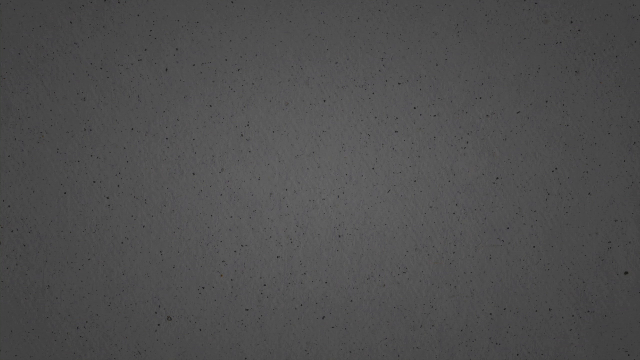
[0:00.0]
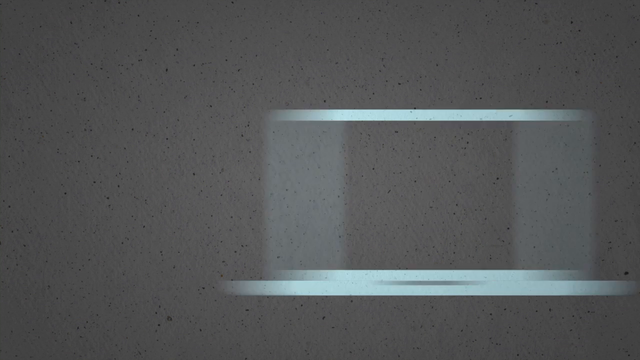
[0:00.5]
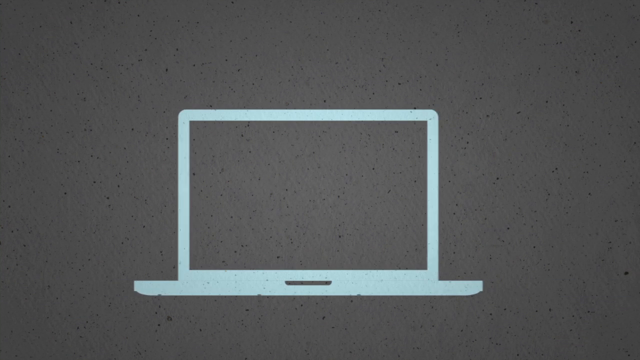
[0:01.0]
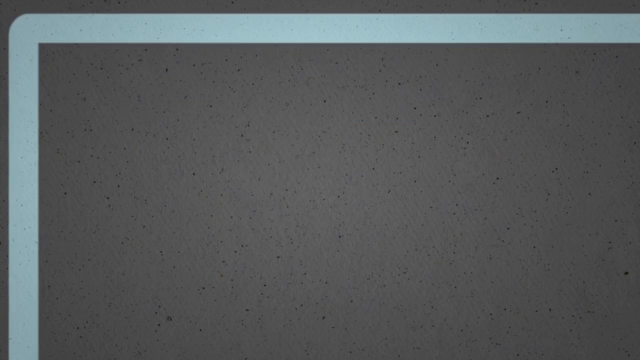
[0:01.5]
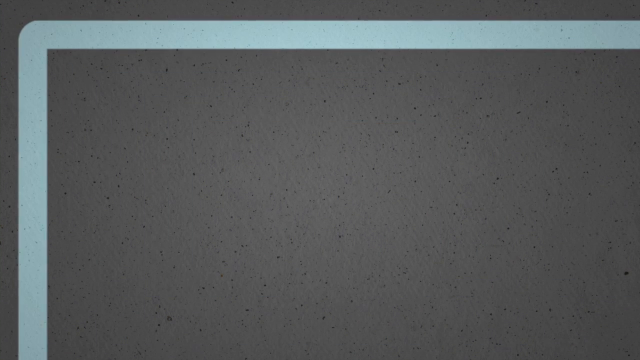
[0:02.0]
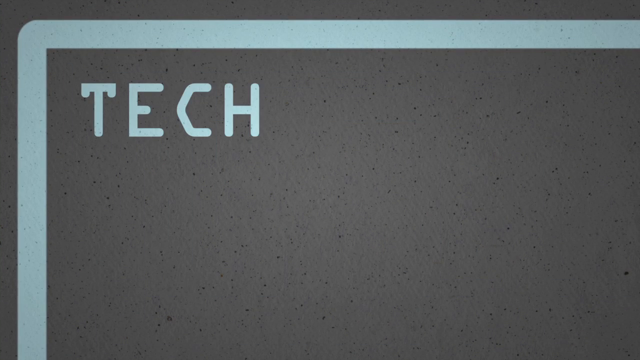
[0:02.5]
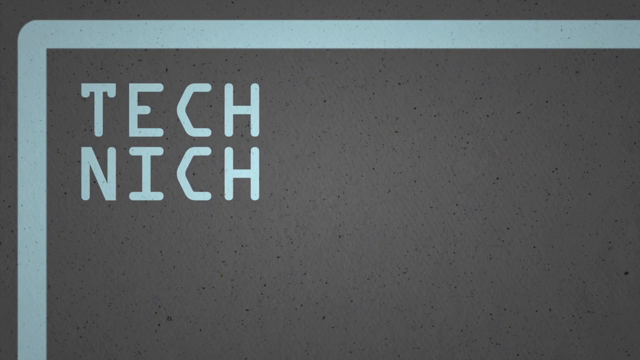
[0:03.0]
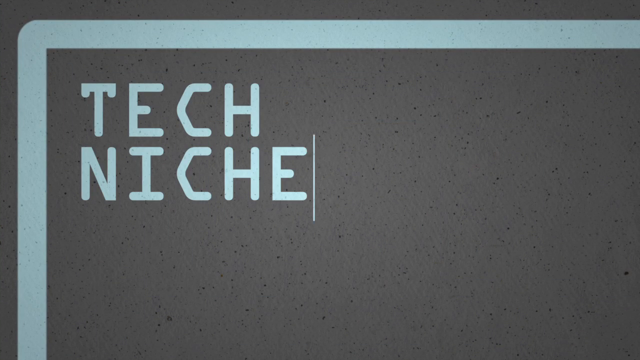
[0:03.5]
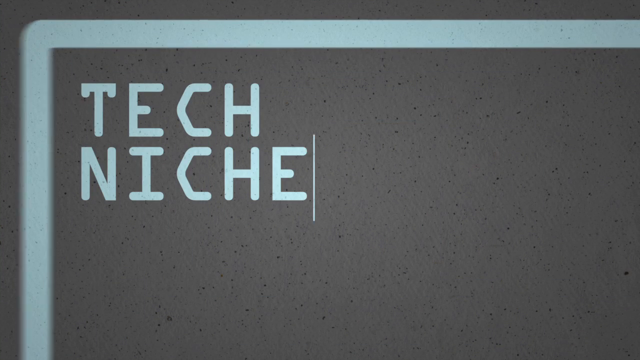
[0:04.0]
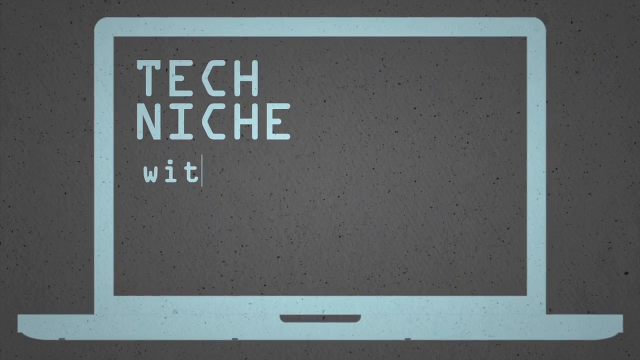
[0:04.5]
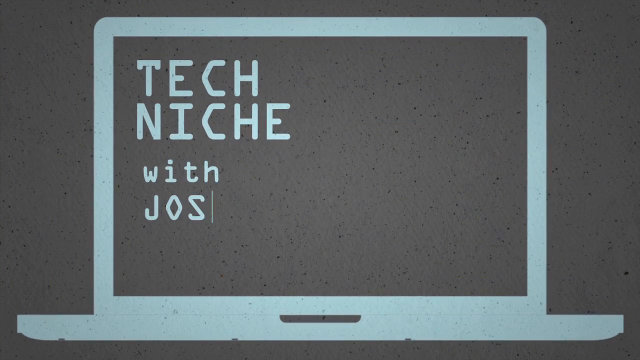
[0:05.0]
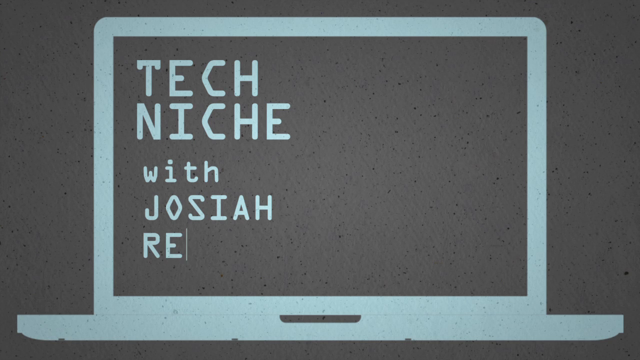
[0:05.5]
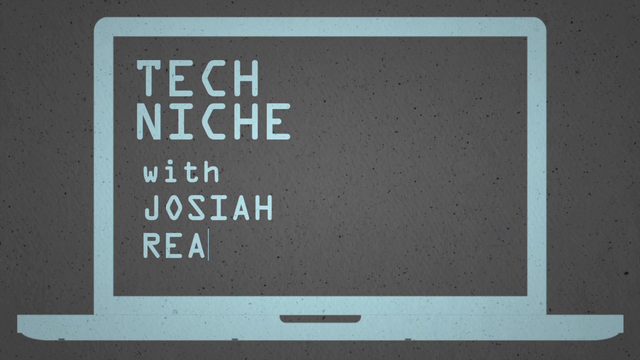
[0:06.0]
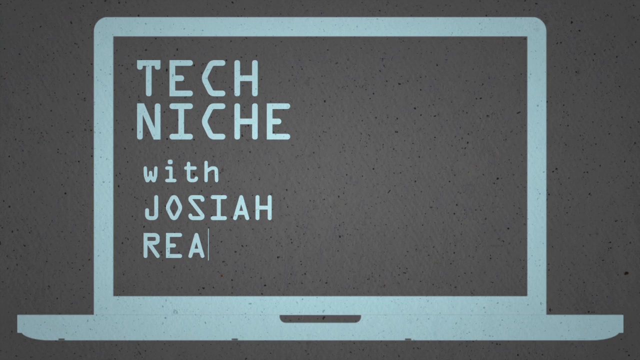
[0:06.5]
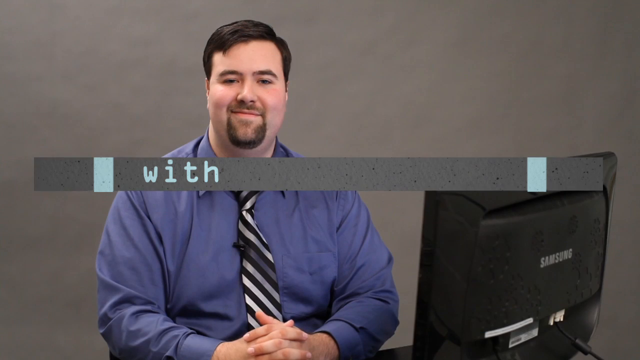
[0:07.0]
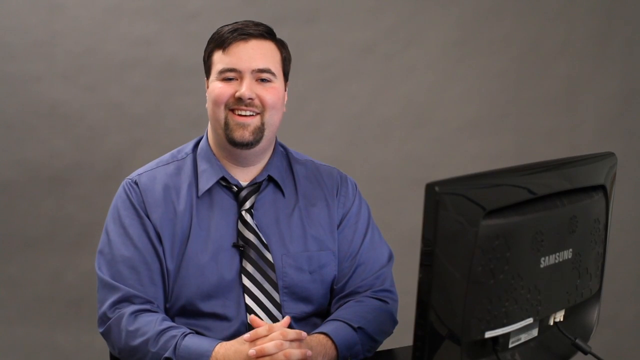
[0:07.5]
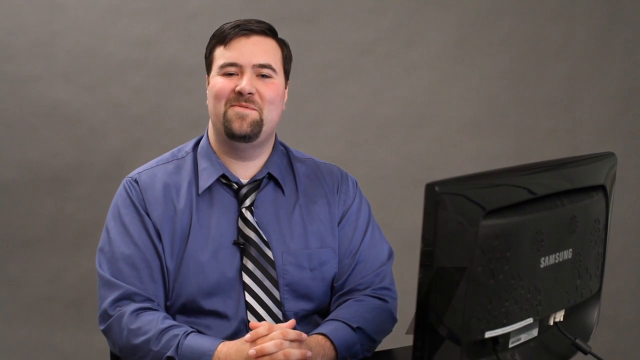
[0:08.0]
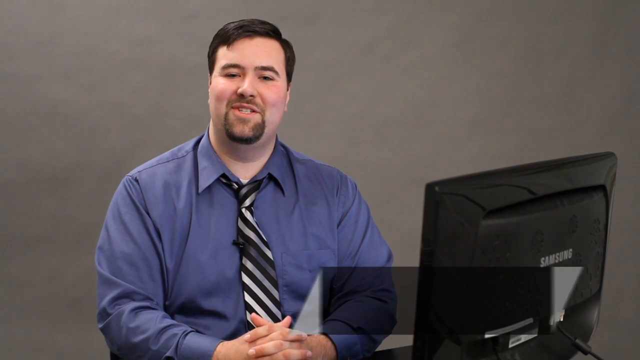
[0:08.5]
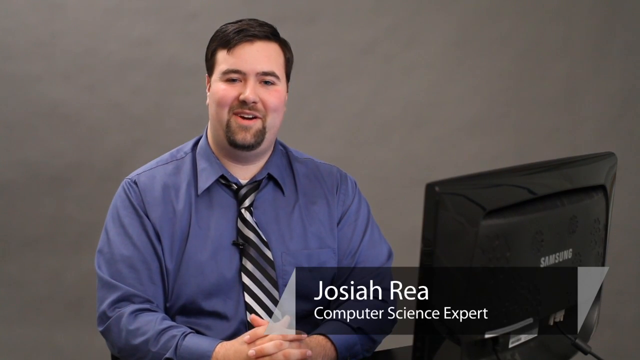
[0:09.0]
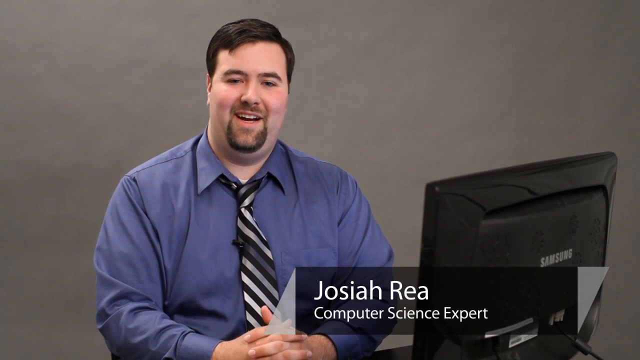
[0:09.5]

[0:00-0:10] An illustration of a teal laptop moves over to the left side of the screen, and the view zooms into the top left. Words are typed out that say "Tech Niche with Josiah Rea." The scene transitions to face a grown man with short dark hair, dressed in a blue dress shirt with a black and white striped tie, sitting next to a Samsung computer monitor. A small message box shows his name: "Josiah Rea, Computer Science Expert." He has somewhat of a shaved mustache and beard.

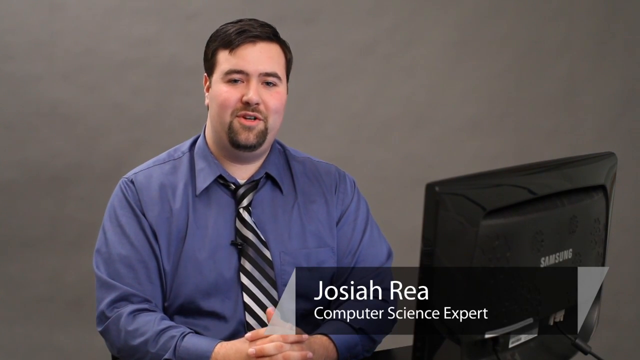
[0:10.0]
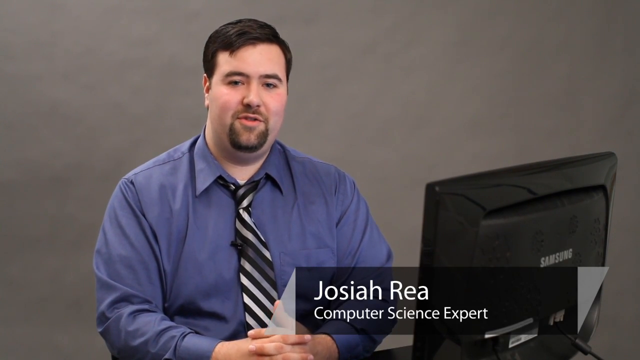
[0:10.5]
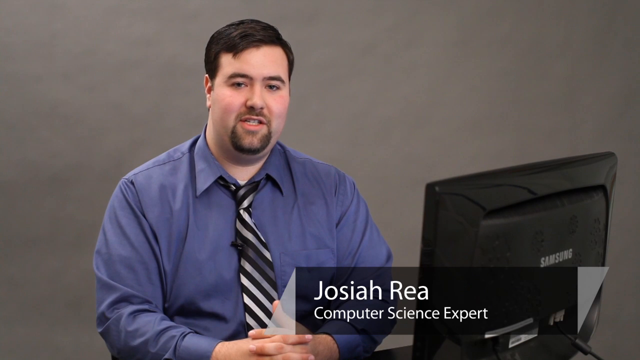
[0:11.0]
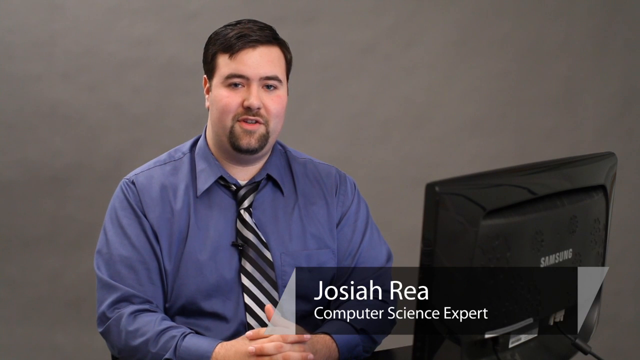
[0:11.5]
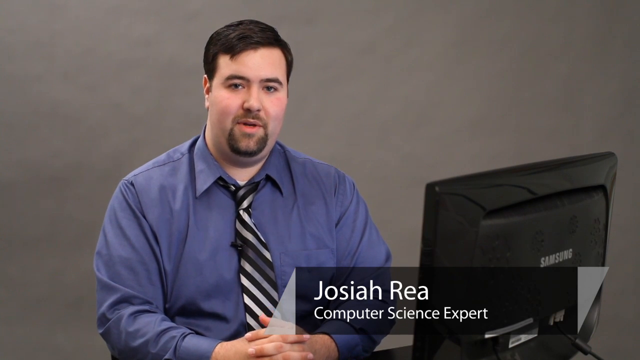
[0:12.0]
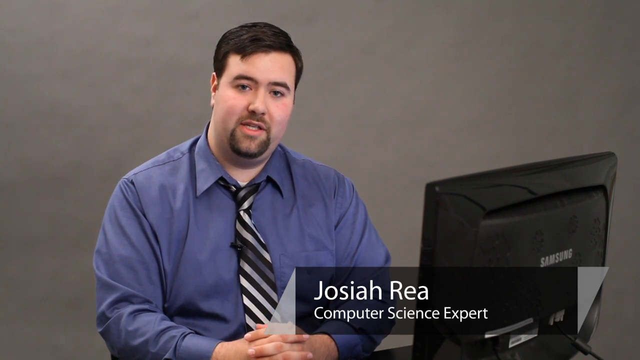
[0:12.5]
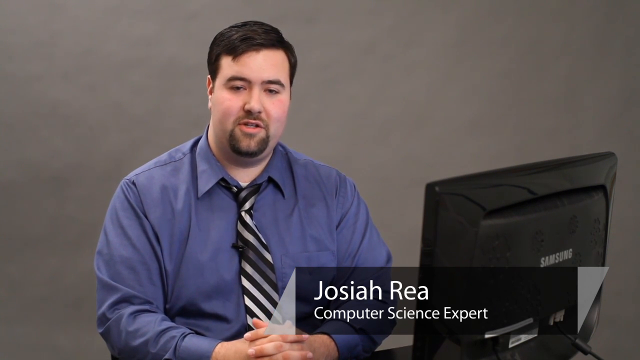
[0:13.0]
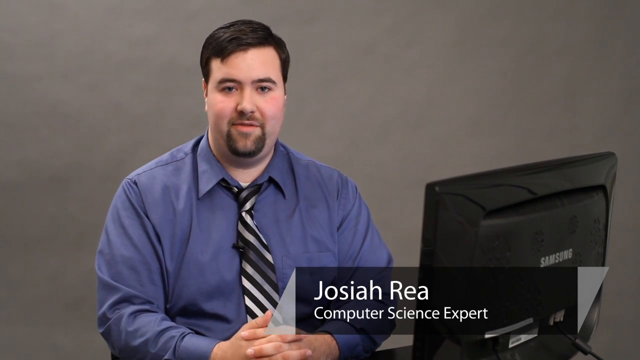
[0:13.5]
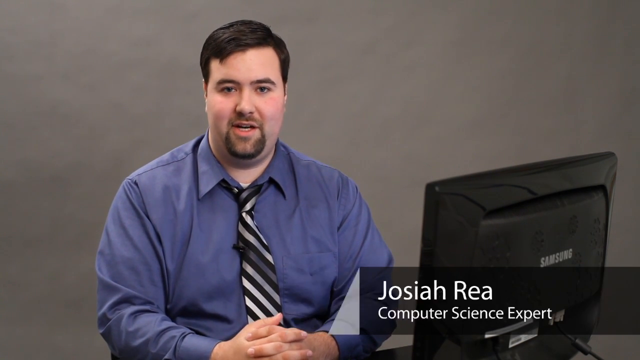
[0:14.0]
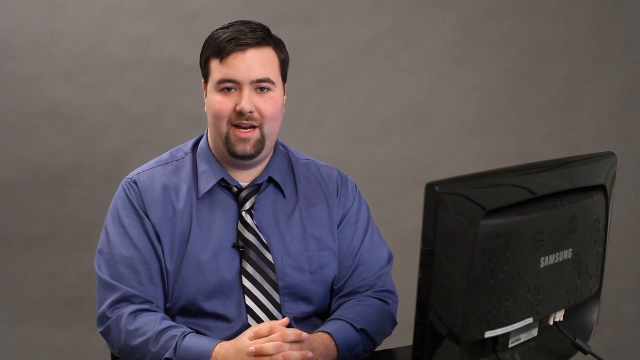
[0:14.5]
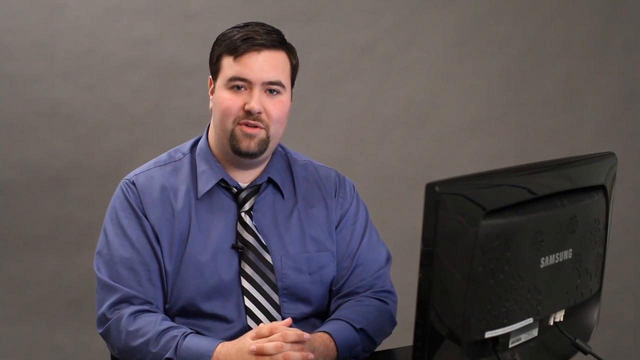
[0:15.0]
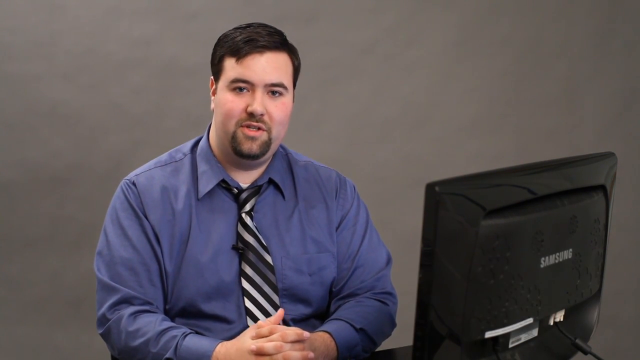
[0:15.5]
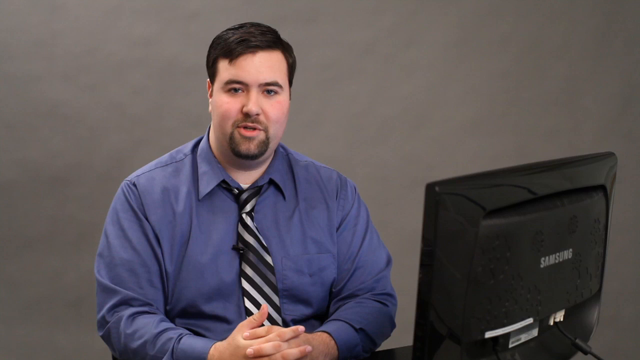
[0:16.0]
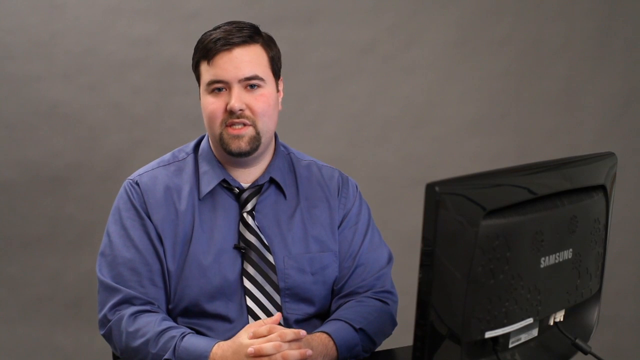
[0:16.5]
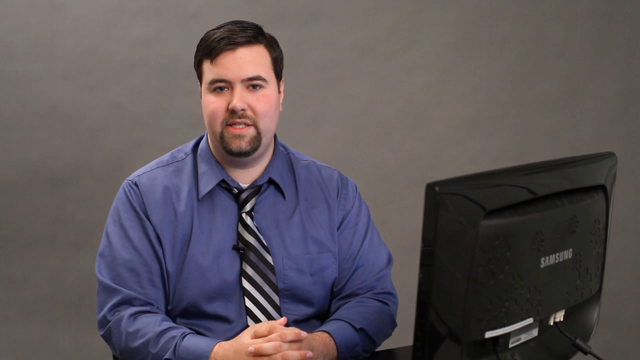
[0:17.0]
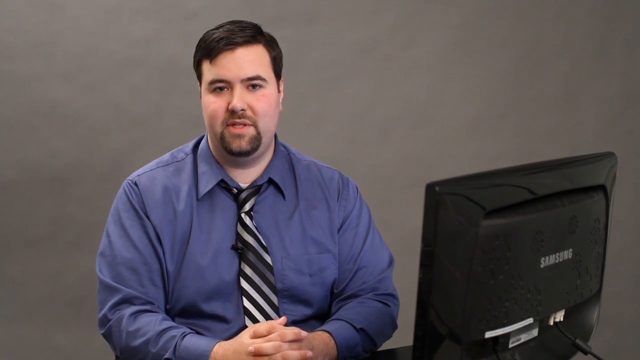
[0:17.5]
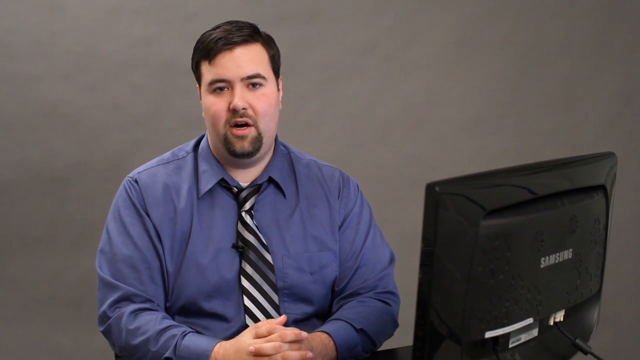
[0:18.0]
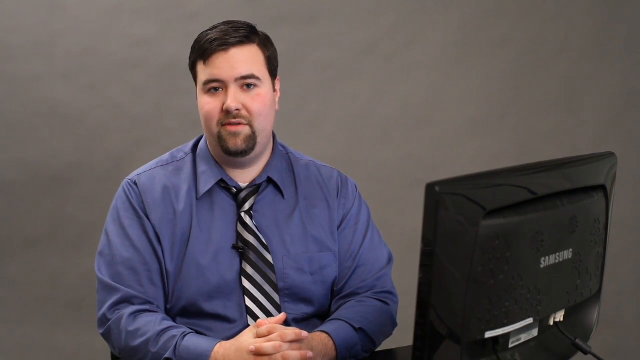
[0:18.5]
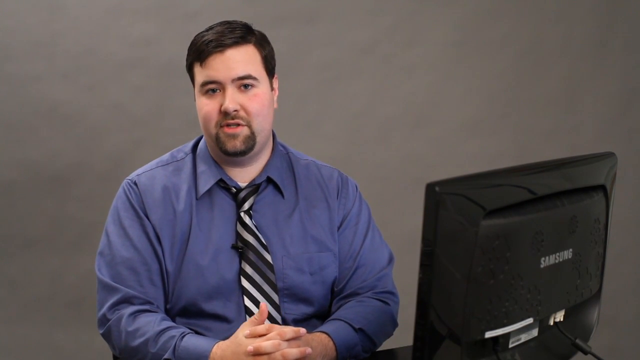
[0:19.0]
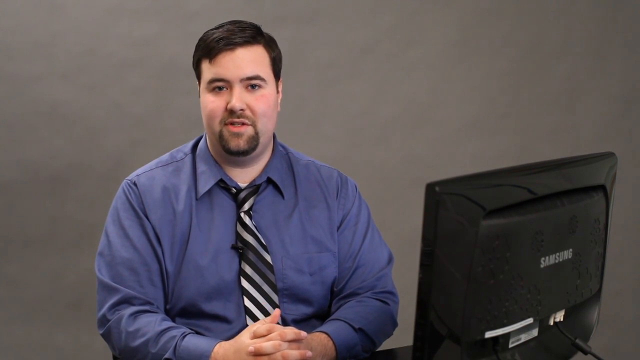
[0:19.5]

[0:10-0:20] Josiah Rea, a computer science expert, is seated, dressed in a blue dress shirt with a black and white striped tie. He has short dark hair and a mustache and beard circling around his lips, and a small microphone is clipped on his tie. He shrugs his shoulders while talking as he is interviewed, sitting in a room with a grey wall in the background. Near the end, he turns his head to the right, facing the Samsung computer monitor.